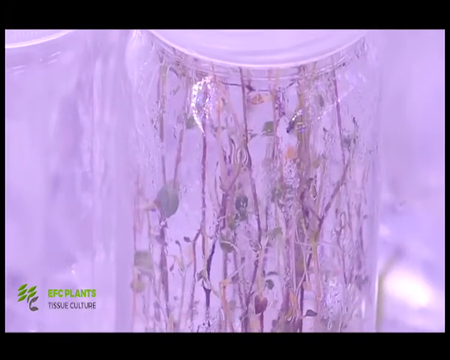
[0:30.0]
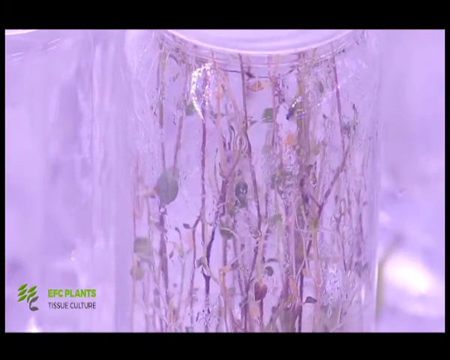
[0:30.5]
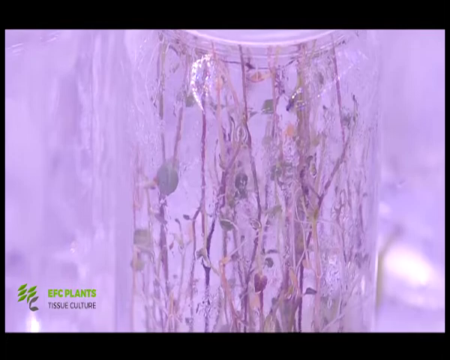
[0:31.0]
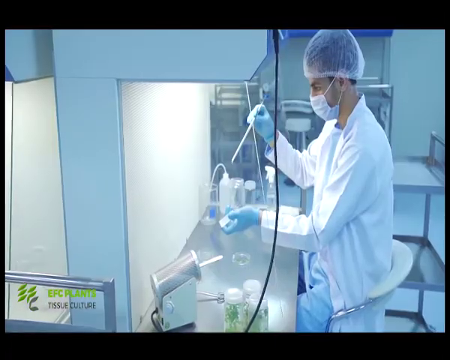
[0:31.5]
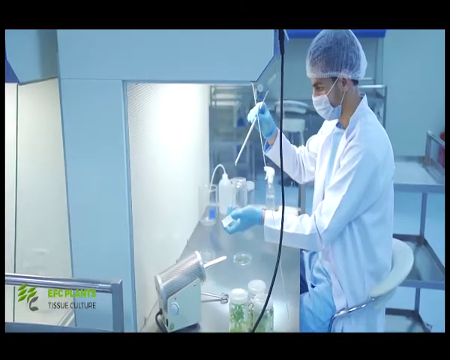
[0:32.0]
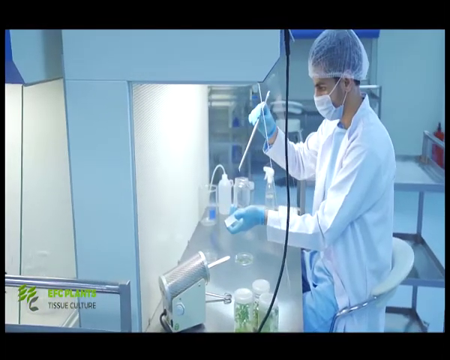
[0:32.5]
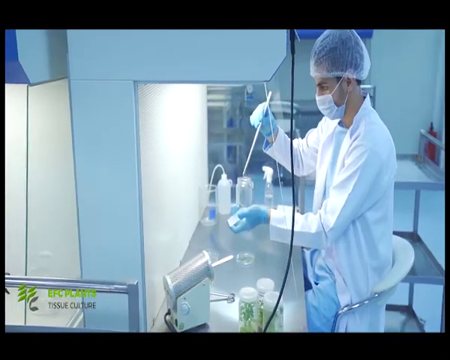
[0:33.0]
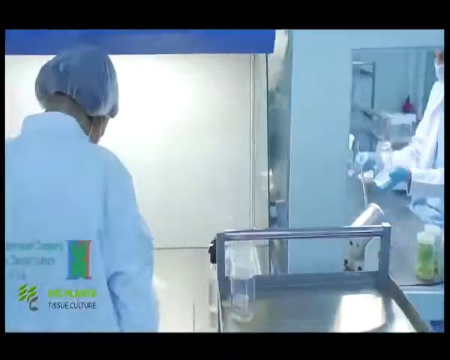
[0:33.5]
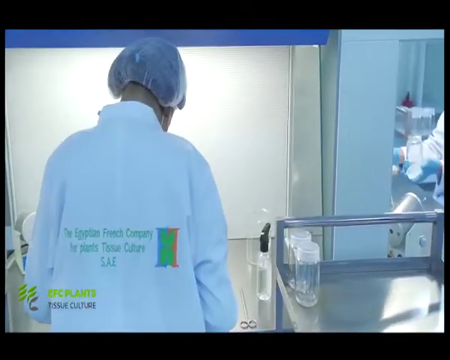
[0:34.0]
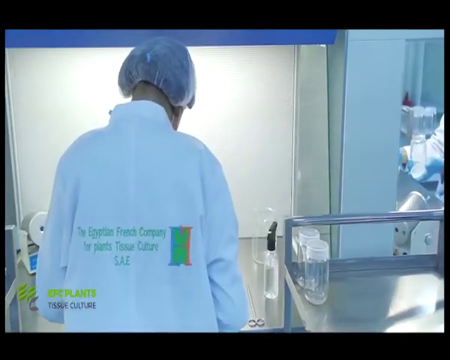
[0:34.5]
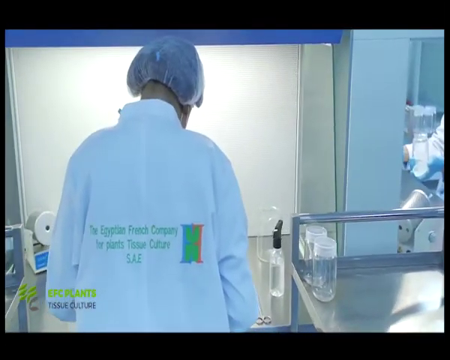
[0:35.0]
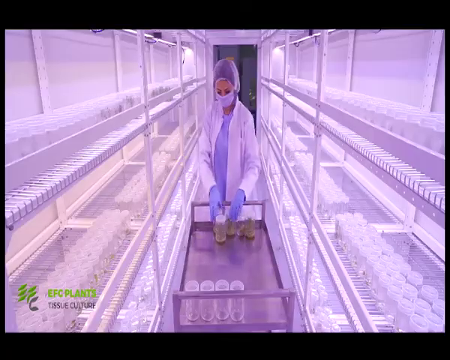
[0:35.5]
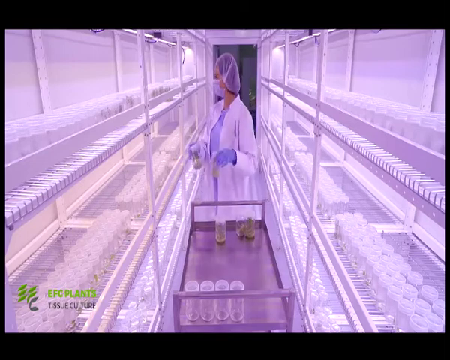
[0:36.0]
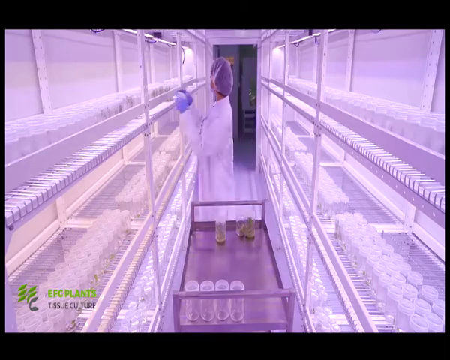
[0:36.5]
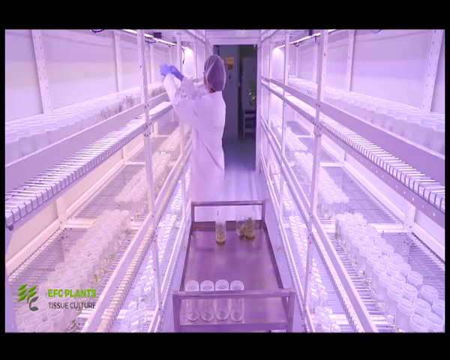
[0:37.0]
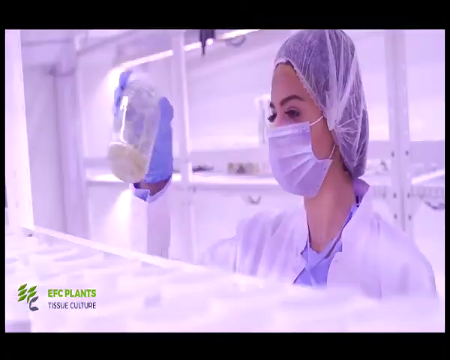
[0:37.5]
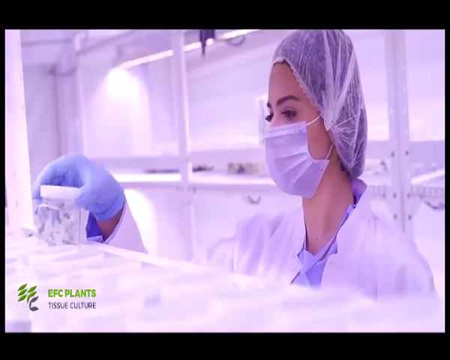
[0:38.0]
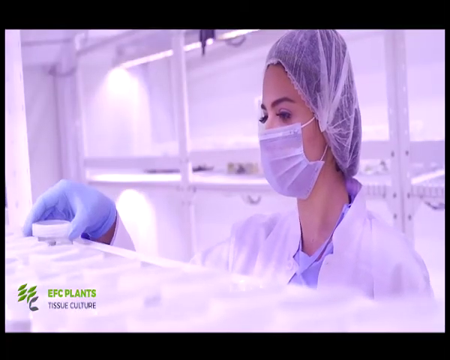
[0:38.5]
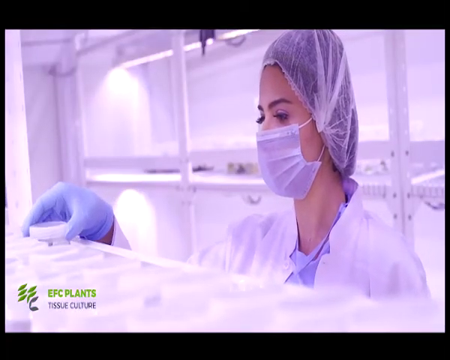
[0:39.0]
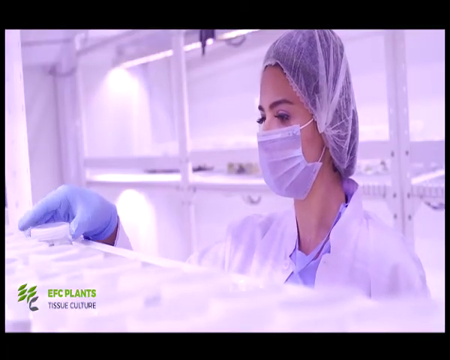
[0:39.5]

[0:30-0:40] A close-up shows a clear glass jar with a white lid, with small, delicate-looking plant stems growing inside. The camera pans slowly downwards. A man is seated on a laboratory chair, dressed in a lab coat, gloves, hairnet and face mask, holding what seems to be a long straw in his hand, and several jars and bottles are on the table. The camera pans slowly to the left, showing a back view of somebody else walking. Then a woman places glass jars from her trolley onto shelves in what looks like a very sterile environment; the shelves, walls and floor all look pristine and white. She arranges each jar in a compartment on the shelves, taking her time to do so carefully.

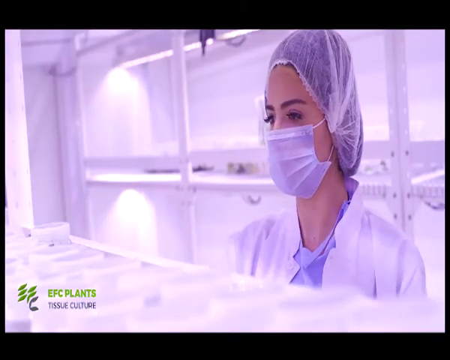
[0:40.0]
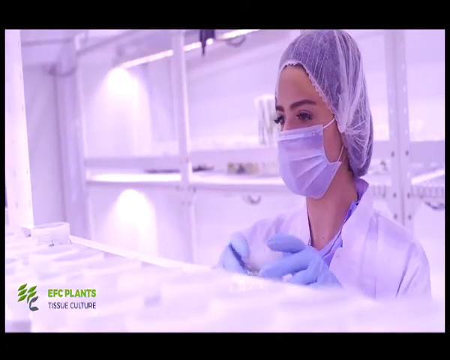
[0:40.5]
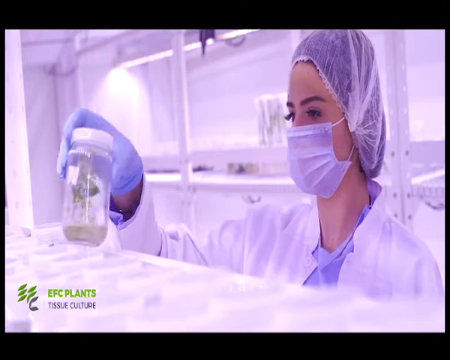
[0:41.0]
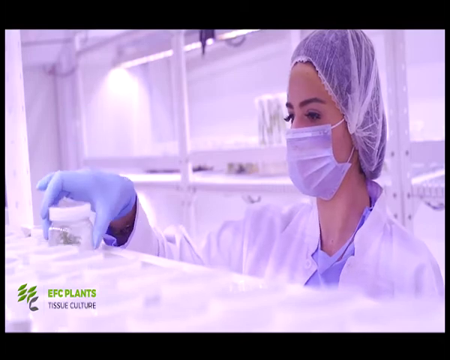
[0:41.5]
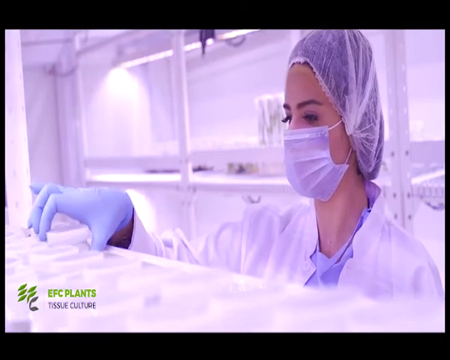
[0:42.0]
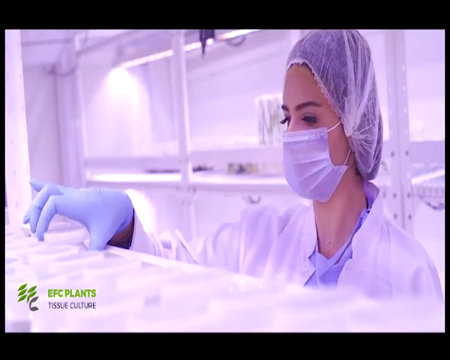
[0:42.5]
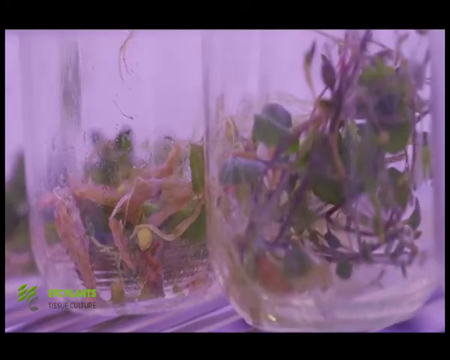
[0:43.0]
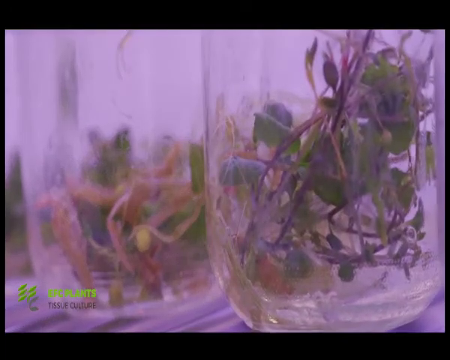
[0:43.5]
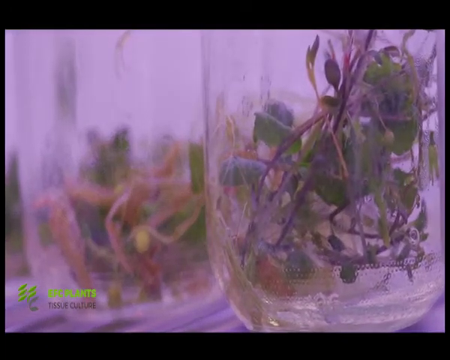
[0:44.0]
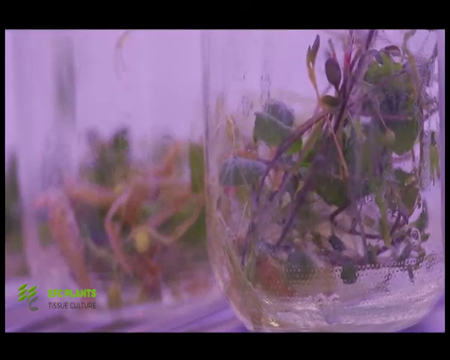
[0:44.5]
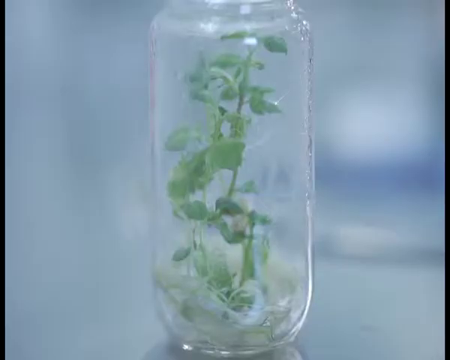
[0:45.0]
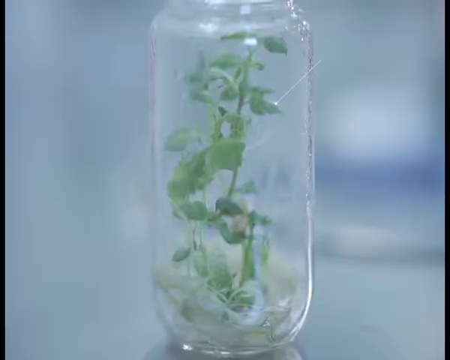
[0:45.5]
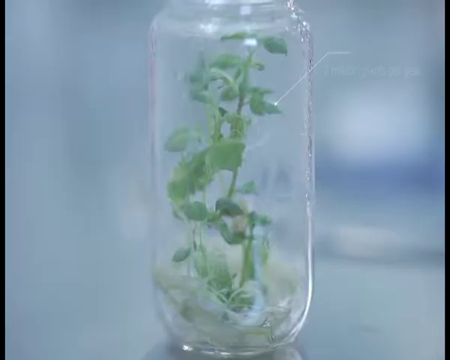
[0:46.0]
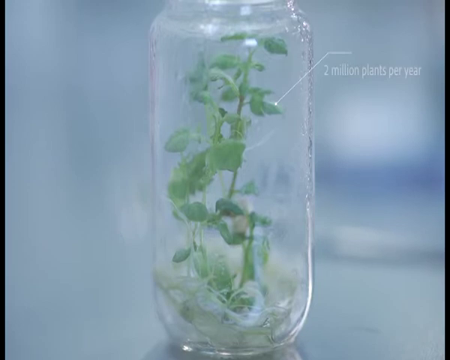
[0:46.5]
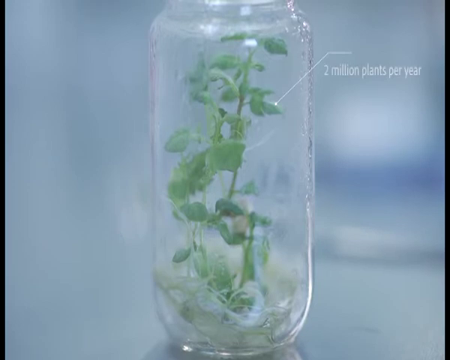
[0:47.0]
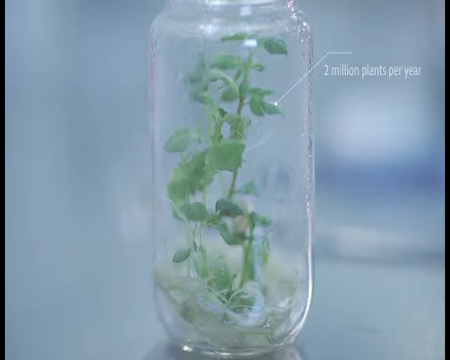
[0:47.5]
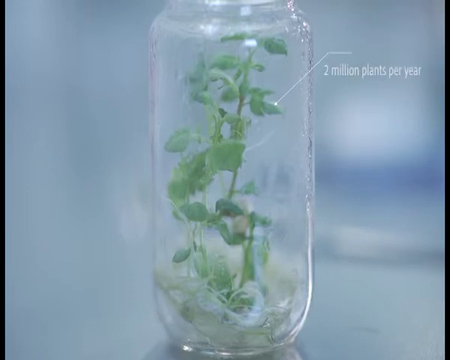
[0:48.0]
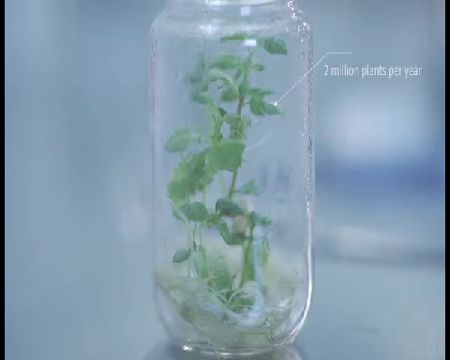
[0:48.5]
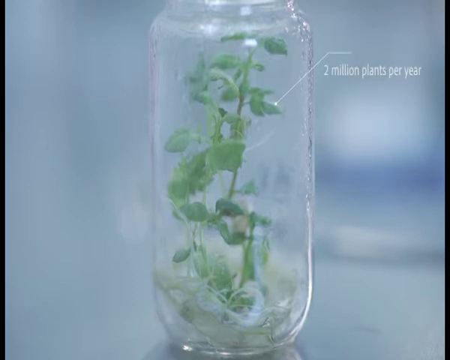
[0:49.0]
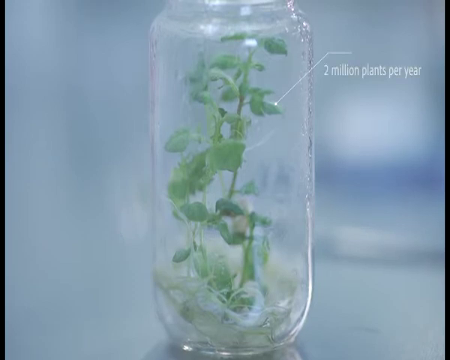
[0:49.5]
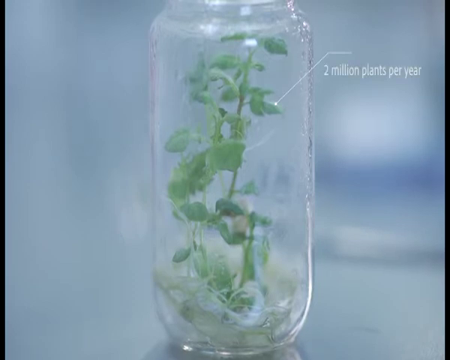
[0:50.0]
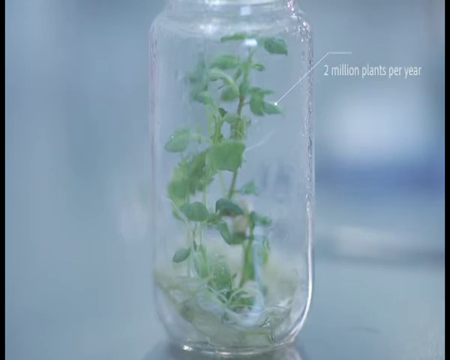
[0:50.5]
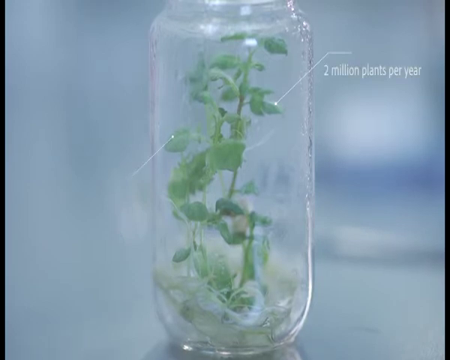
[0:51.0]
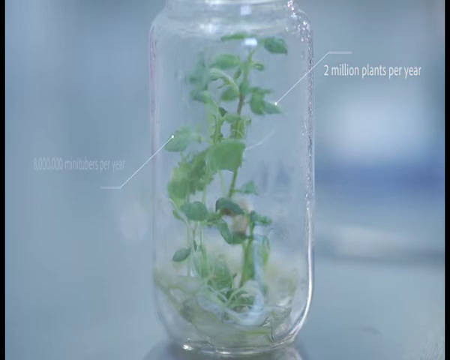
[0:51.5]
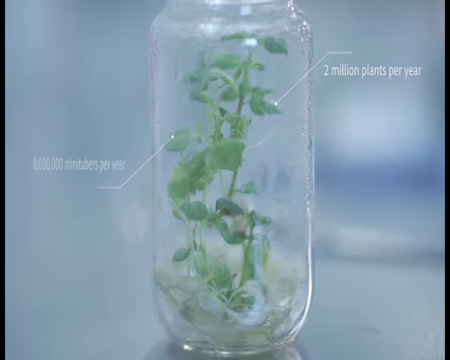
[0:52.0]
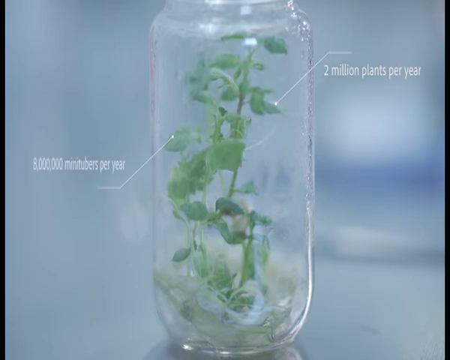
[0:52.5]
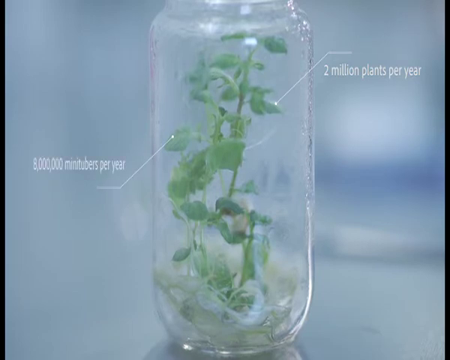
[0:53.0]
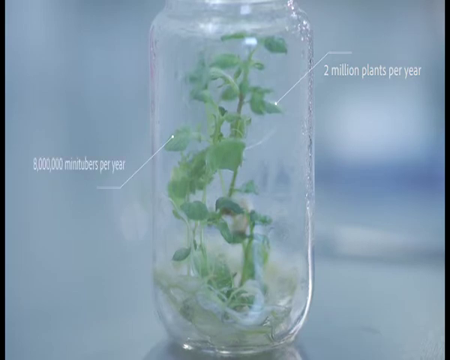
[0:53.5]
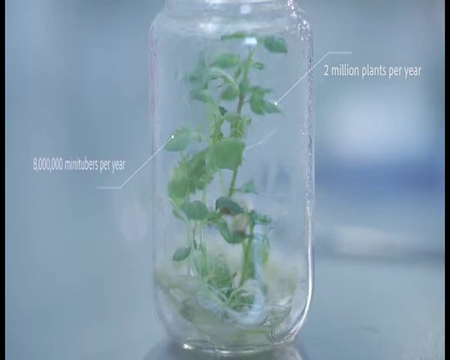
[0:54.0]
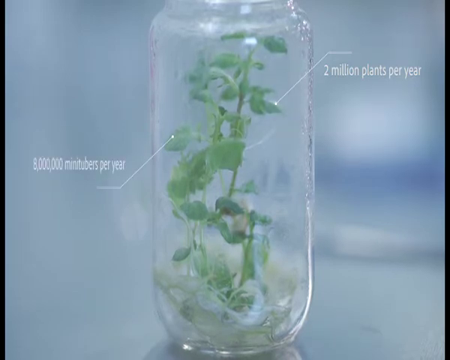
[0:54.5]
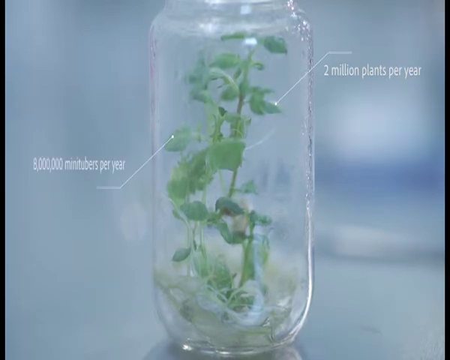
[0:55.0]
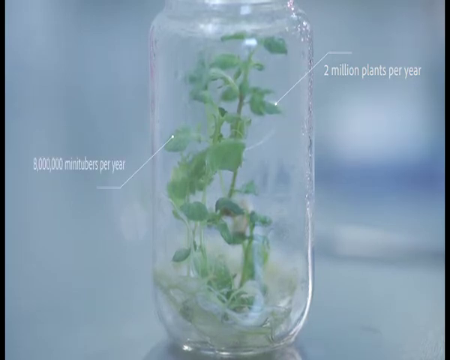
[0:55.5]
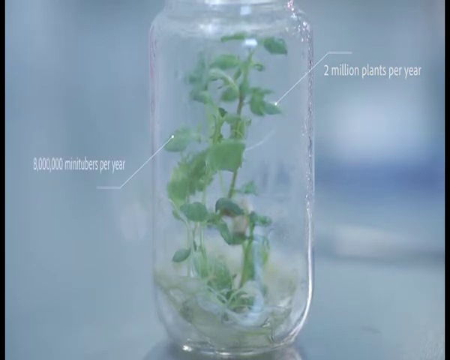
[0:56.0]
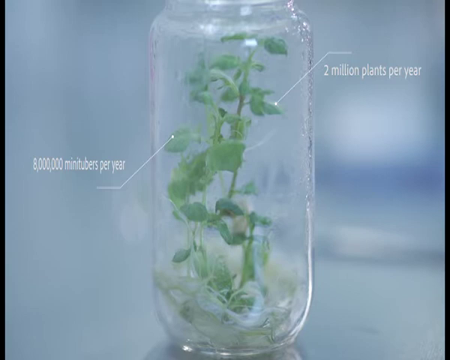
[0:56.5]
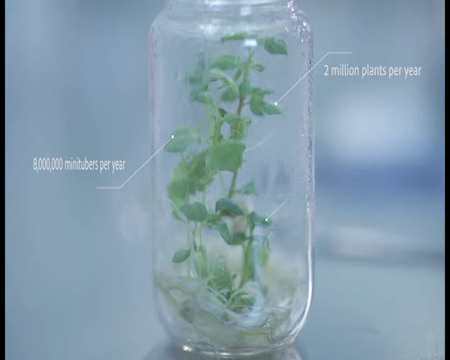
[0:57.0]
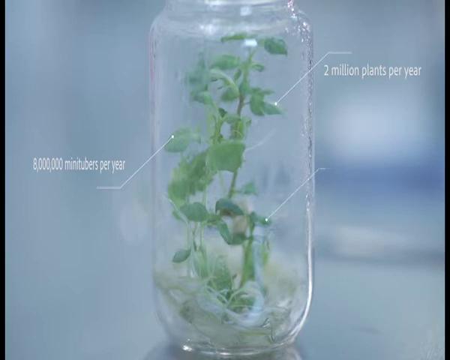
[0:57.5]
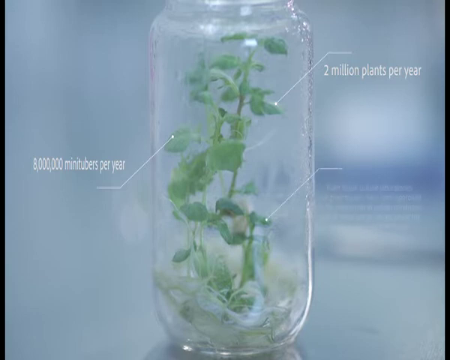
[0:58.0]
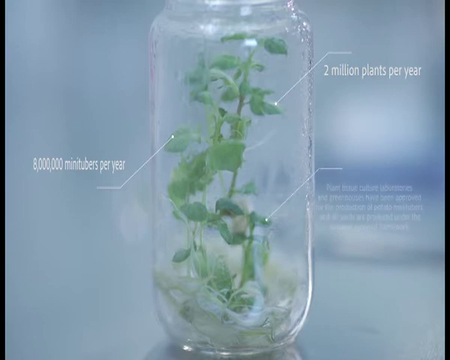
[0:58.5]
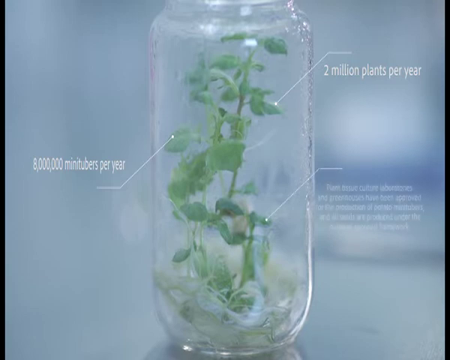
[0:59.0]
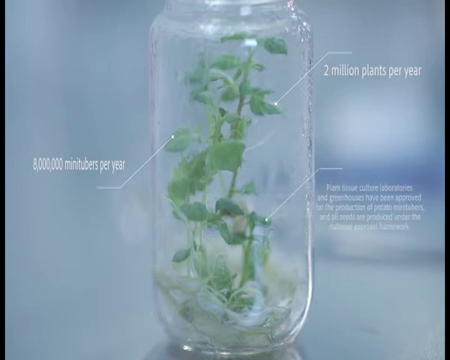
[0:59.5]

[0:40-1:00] A close-up shows a woman from her head to her chest, dressed in a white lab coat with a face mask and hair netting. She is standing in what seems to be a sterile storage area, with a shelf behind her and in front of her. She places glass jars with small plant stems in them into the shelf compartments. A close-up then shows the plant stems growing inside the glass jars, with their leaves and purple stems visible. Next, a close-up of one of the glass jars with green plants growing in it shows labels: the label on the left says "8 million mini tubers per year," and the label on the right side says "2 million plants per year." Then a third label appears on the right. The labels stay on screen for a while.